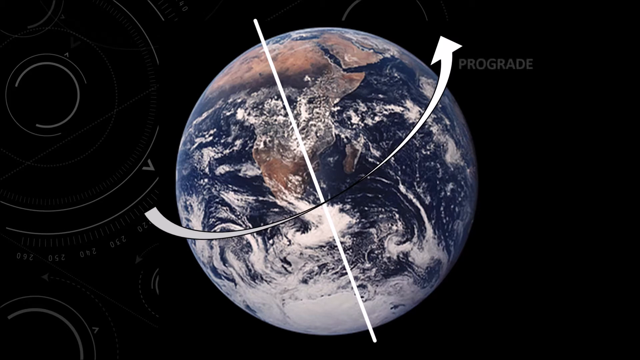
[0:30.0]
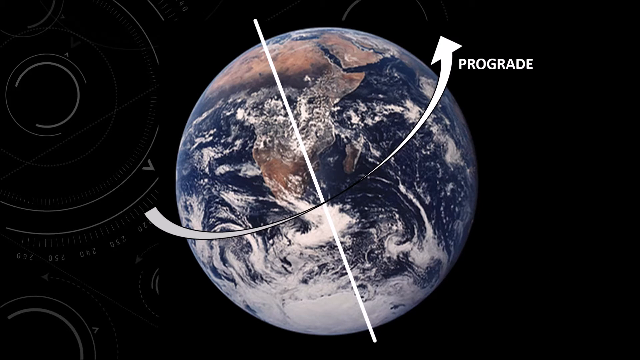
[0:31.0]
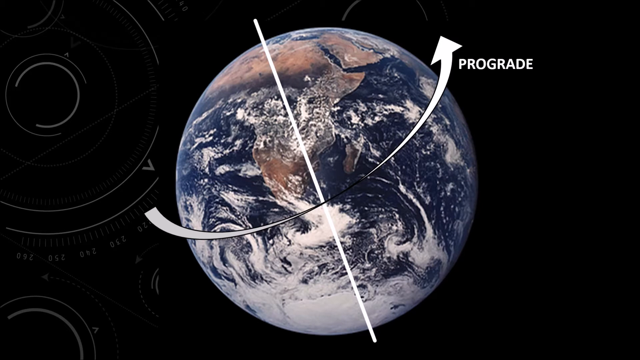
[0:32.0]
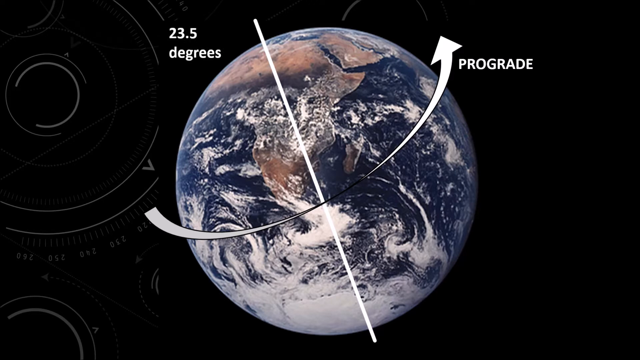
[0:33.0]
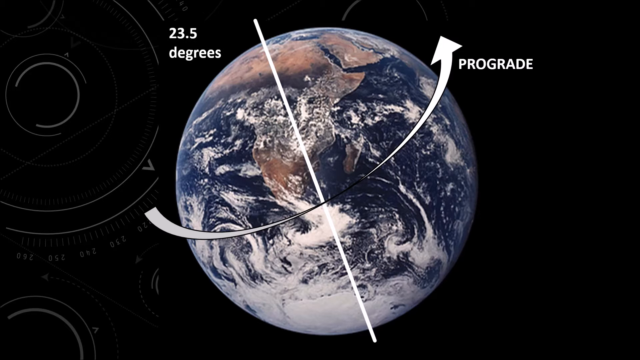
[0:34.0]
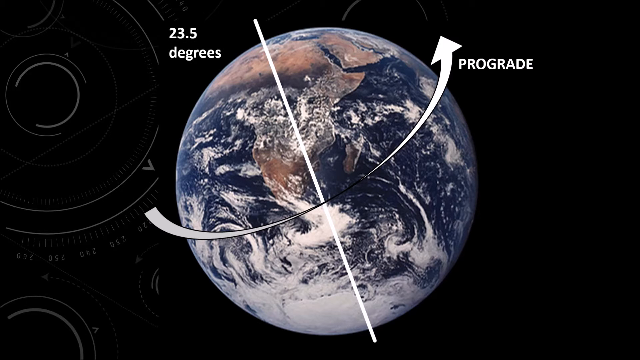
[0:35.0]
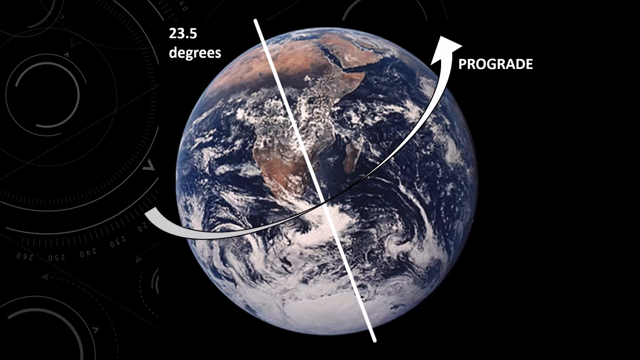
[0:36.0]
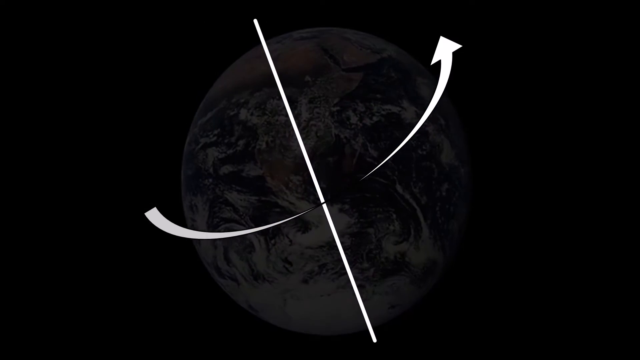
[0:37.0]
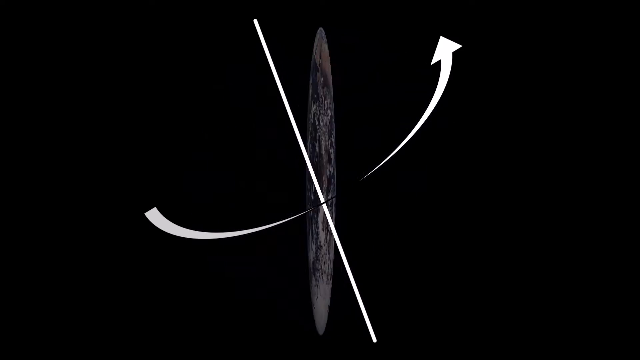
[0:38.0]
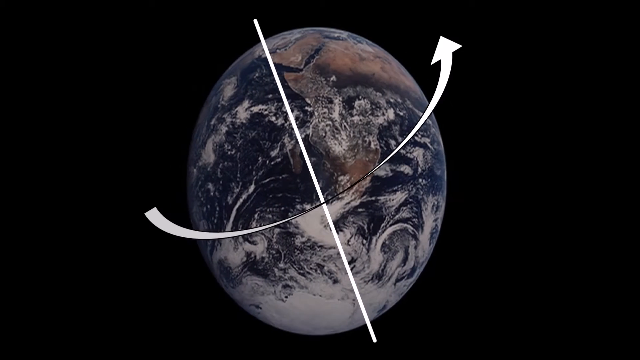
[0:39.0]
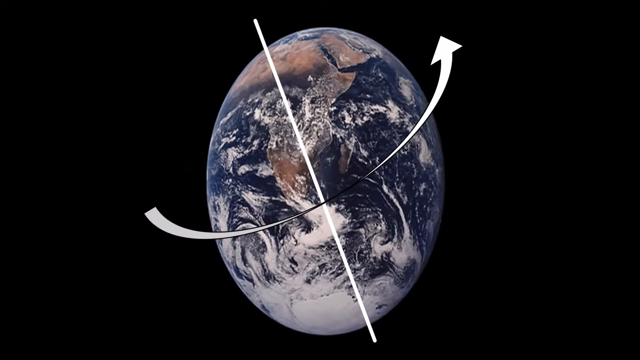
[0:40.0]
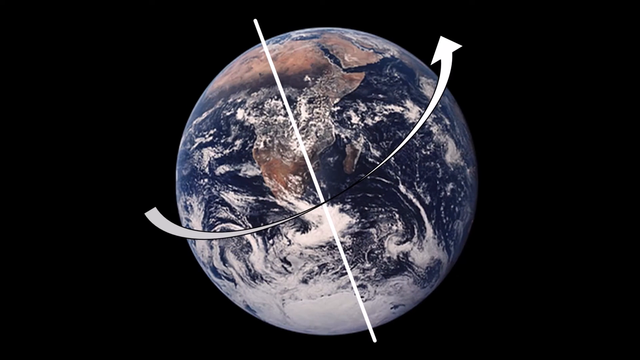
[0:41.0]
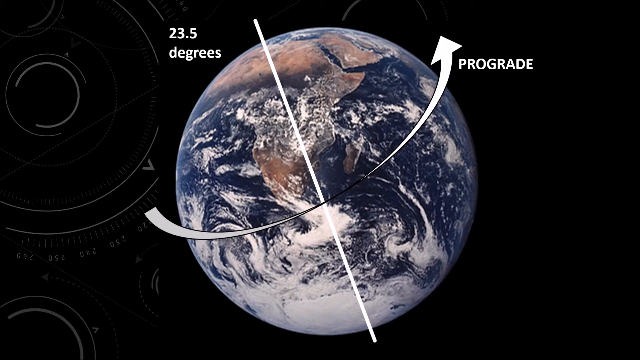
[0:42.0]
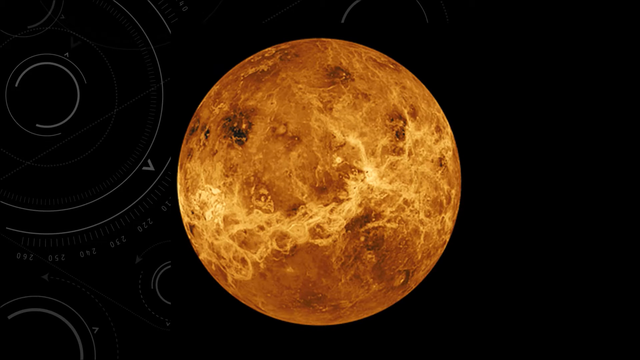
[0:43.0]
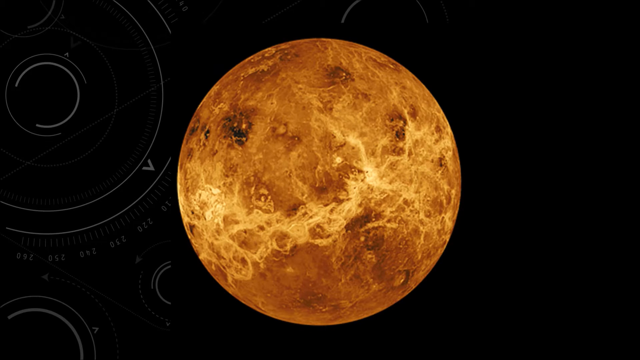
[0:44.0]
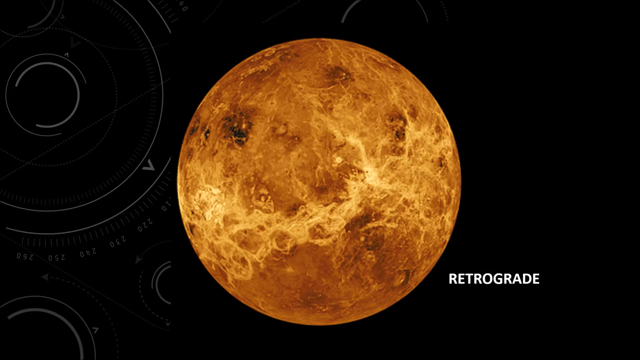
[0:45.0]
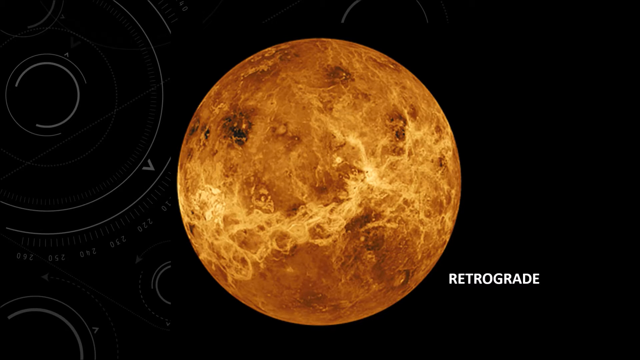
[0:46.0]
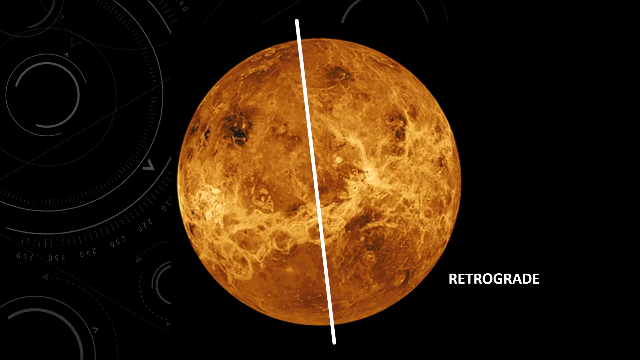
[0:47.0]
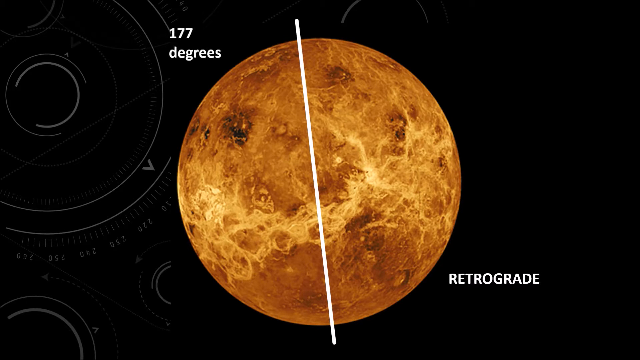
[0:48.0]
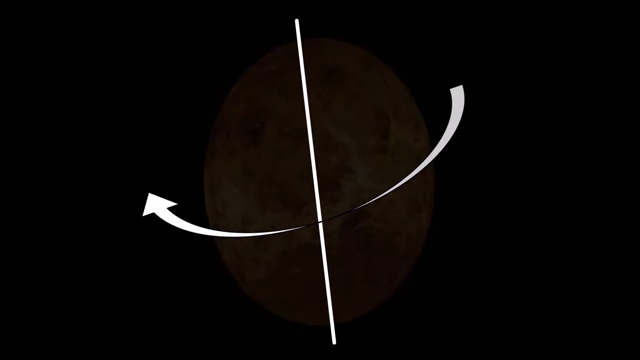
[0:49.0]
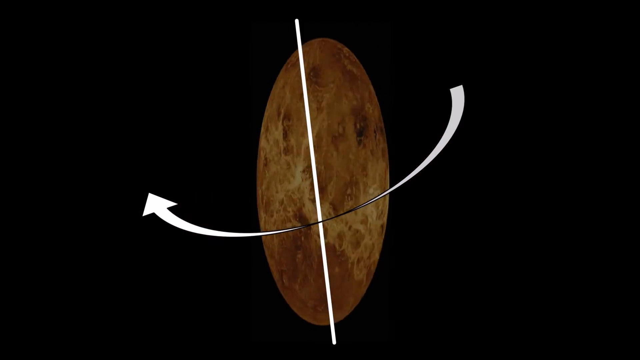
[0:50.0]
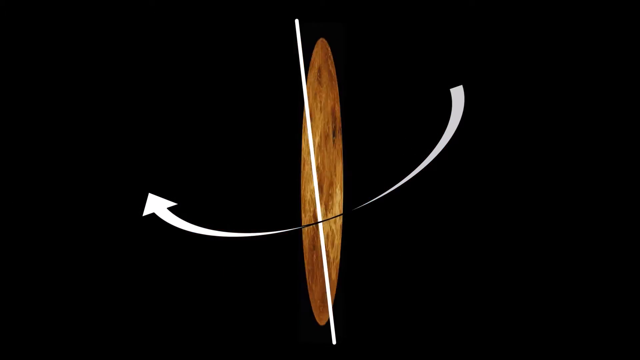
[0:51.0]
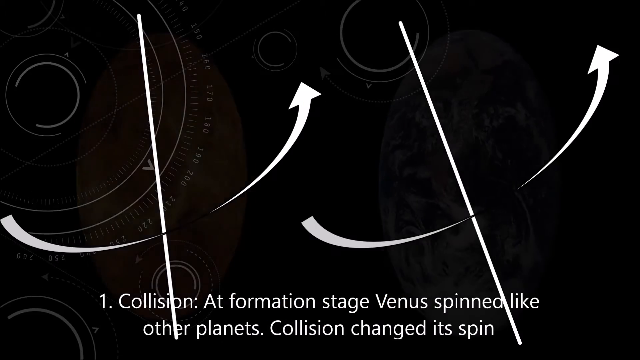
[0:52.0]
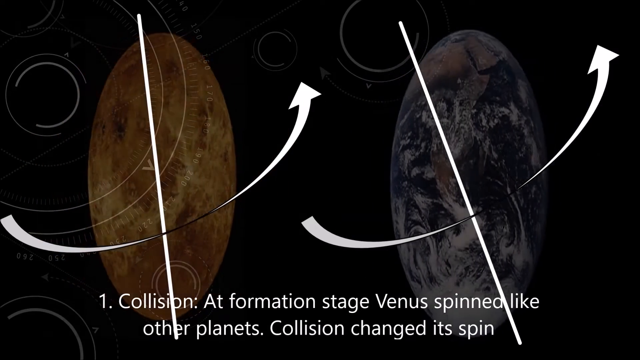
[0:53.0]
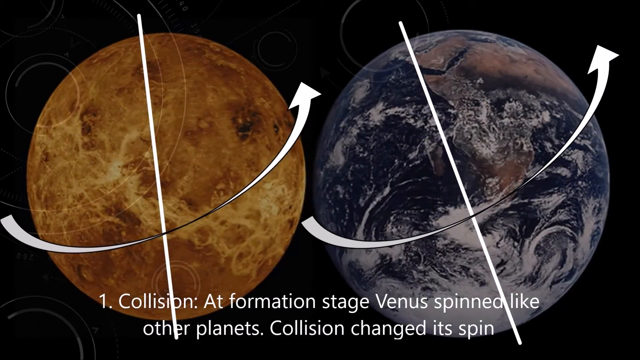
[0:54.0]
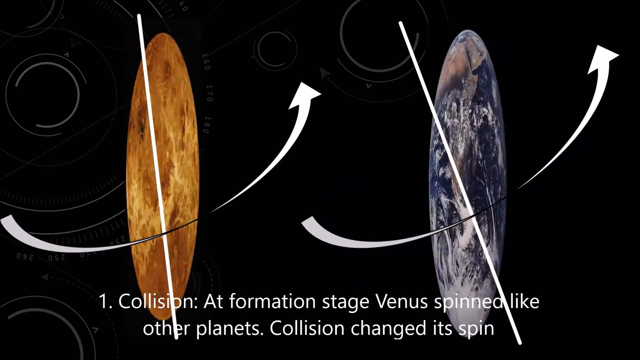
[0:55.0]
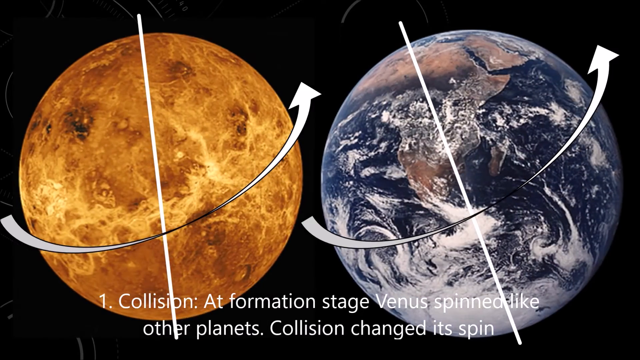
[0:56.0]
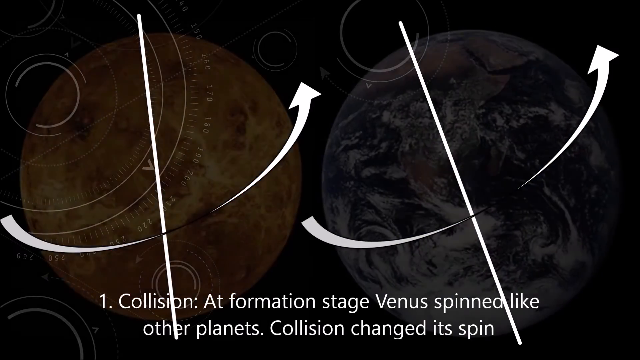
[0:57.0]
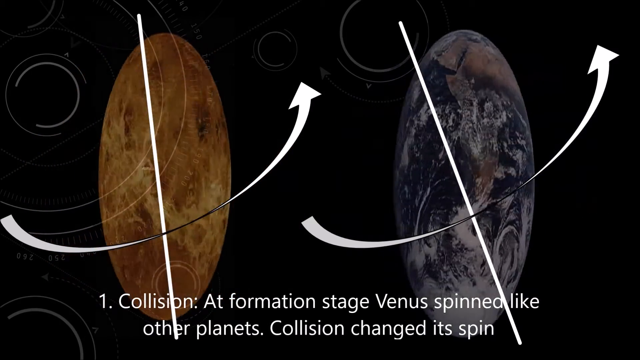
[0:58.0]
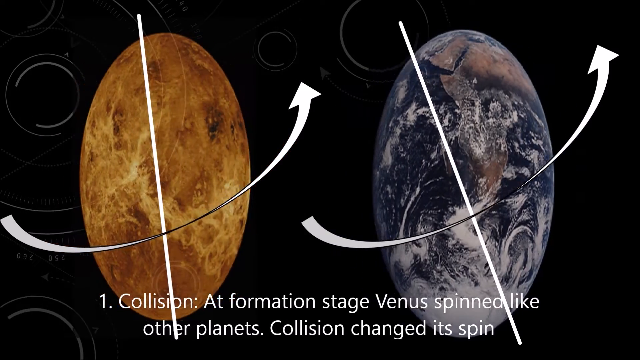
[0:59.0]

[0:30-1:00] The still image of Earth continues, now slanted, with the same white line running from top to bottom and a long arrow running from left to right. Next to the arrow is the word "prograde" in white font, and in the upper left-hand corner, toward the top of Earth, "23.5 degrees" appears, also in white. The same image of Earth then rotates counterclockwise. Next comes a still image of the planet shown earlier that looks to be Venus, judging by its brown, yellow and orange colors. It gets the same animation as Earth: a line from top to bottom, "retrograde" on the right side, "177 degrees" in the upper left-hand corner, and a white arrow running from right to left. Then both planets are shown, and at the bottom the text reads "collision at formation stage Venus spin like other planets collision change its spin".